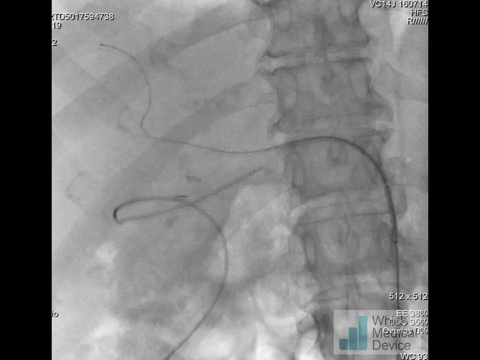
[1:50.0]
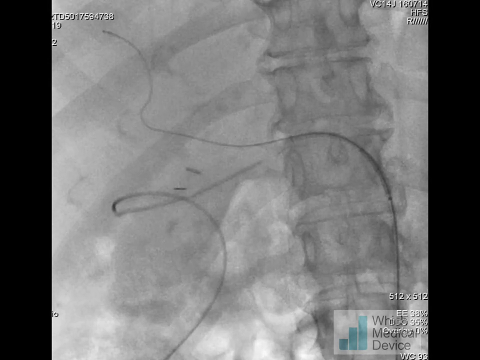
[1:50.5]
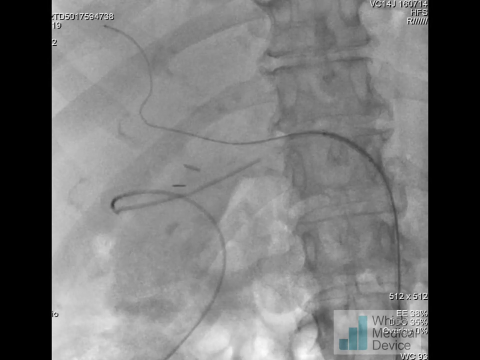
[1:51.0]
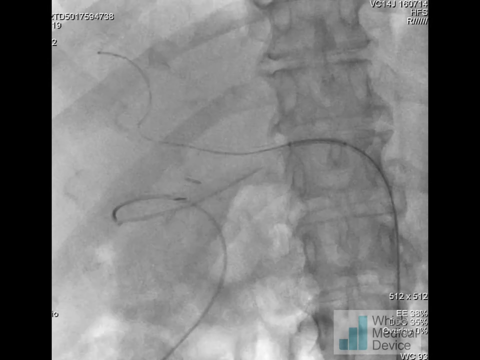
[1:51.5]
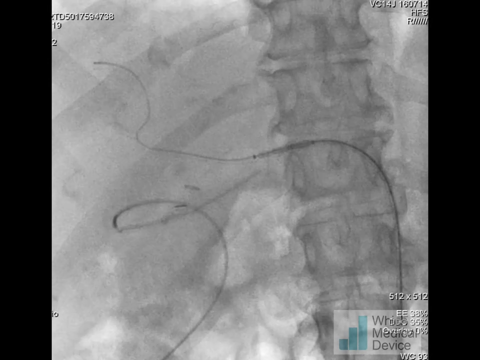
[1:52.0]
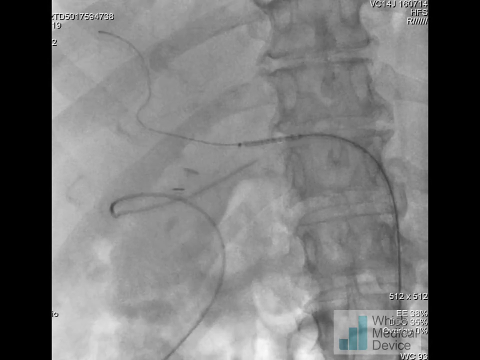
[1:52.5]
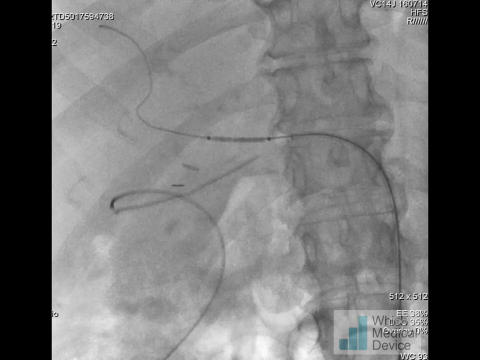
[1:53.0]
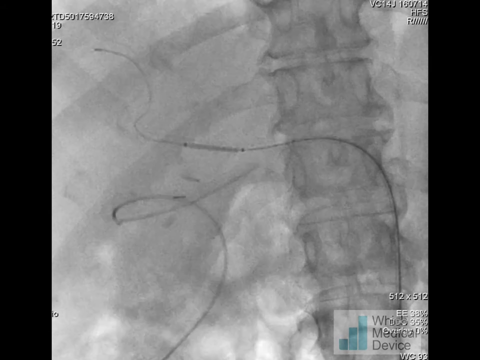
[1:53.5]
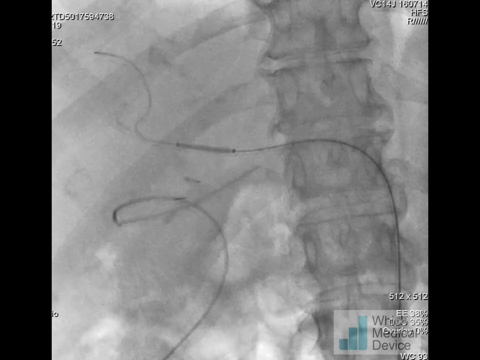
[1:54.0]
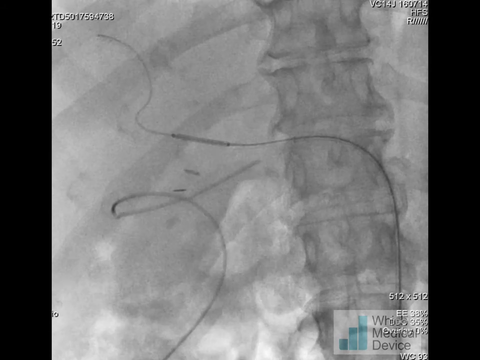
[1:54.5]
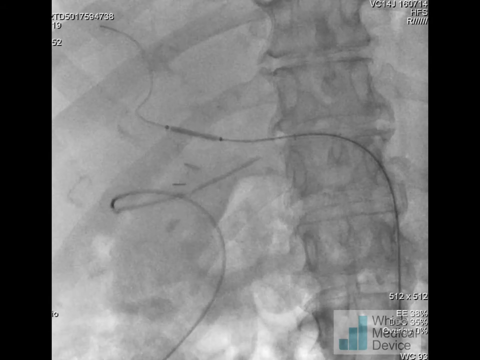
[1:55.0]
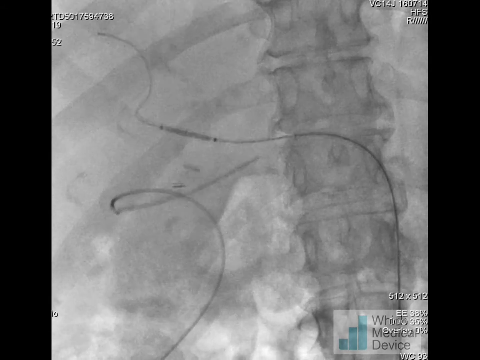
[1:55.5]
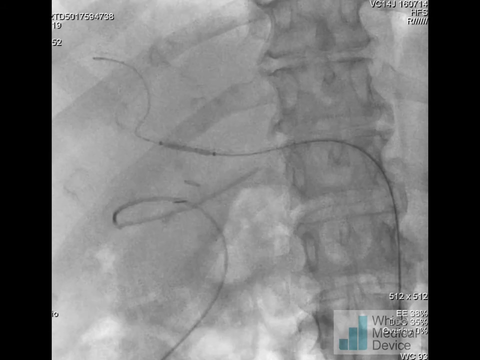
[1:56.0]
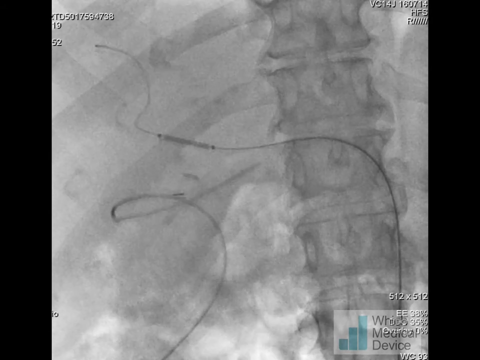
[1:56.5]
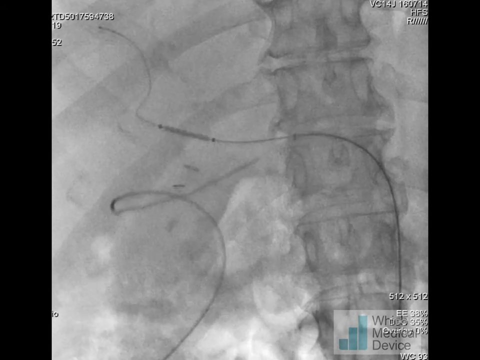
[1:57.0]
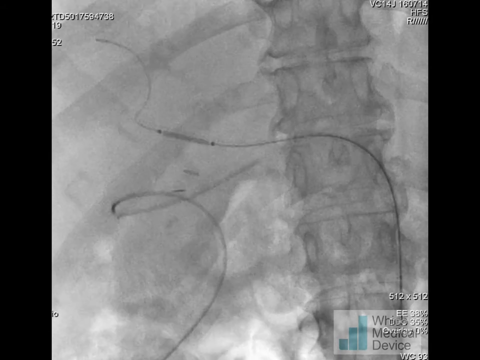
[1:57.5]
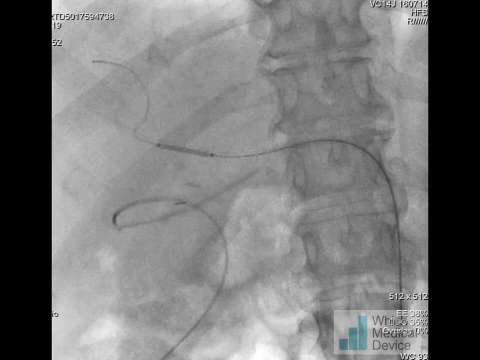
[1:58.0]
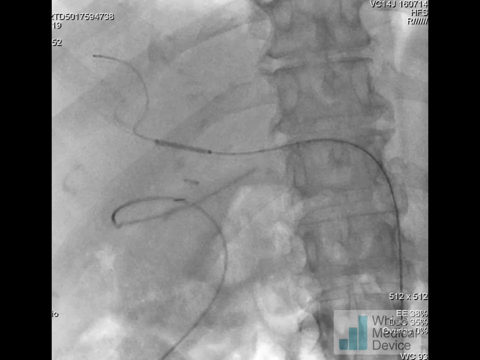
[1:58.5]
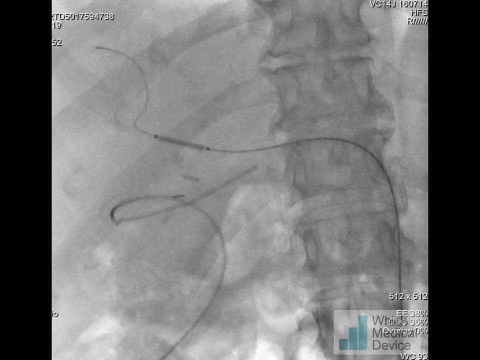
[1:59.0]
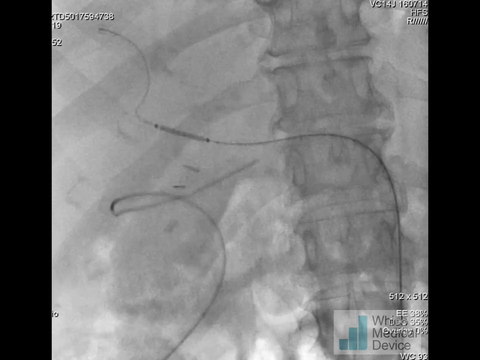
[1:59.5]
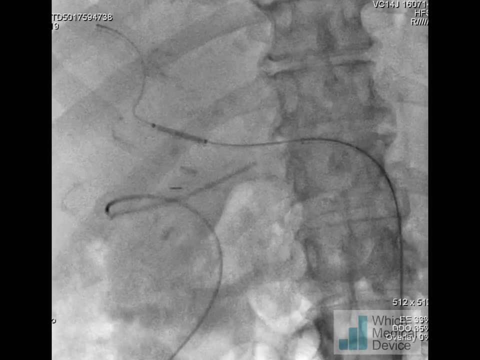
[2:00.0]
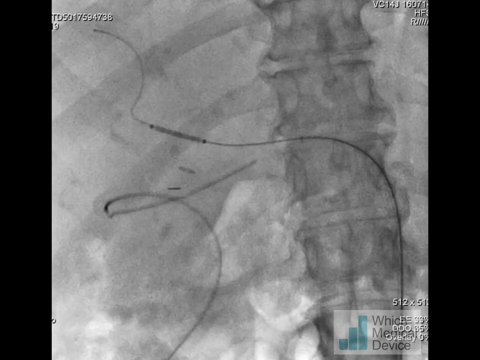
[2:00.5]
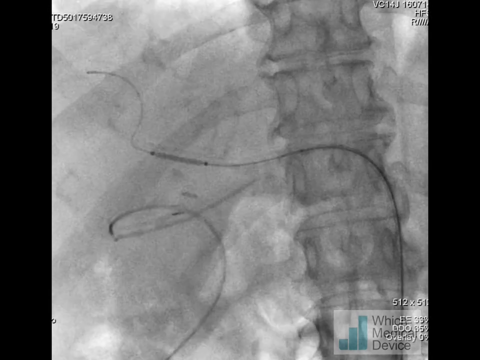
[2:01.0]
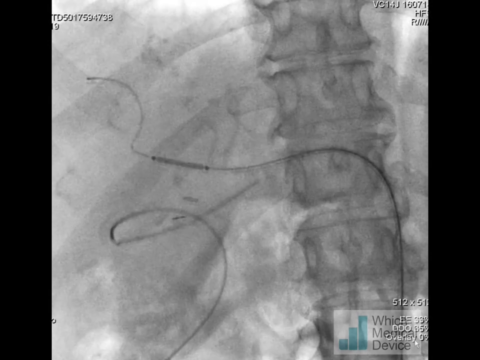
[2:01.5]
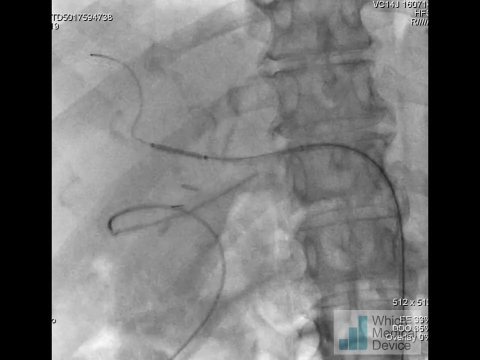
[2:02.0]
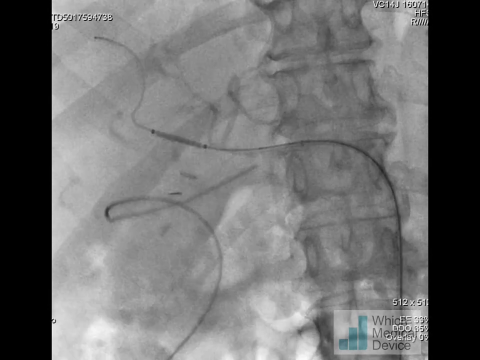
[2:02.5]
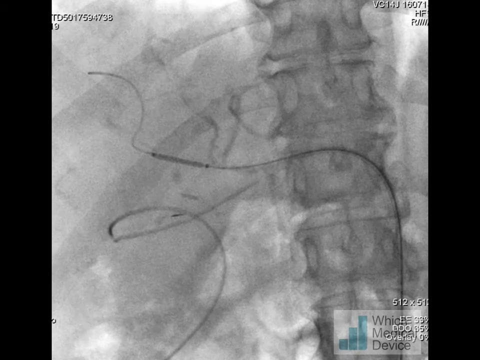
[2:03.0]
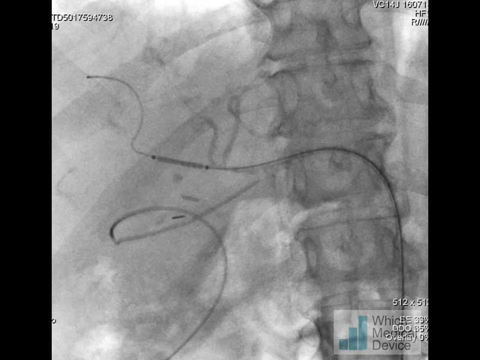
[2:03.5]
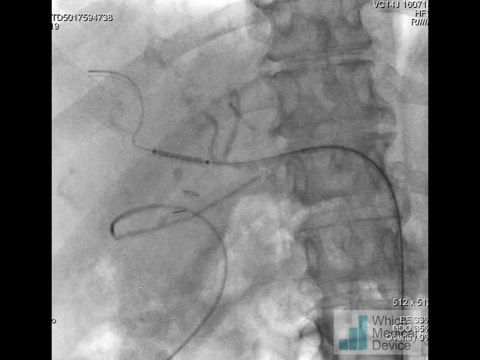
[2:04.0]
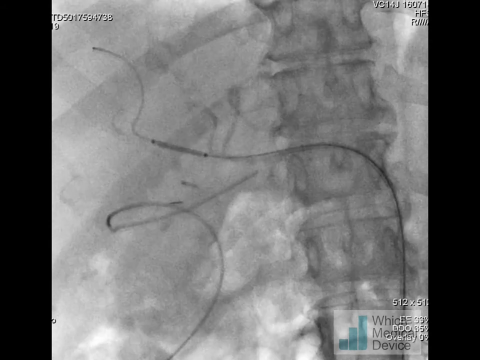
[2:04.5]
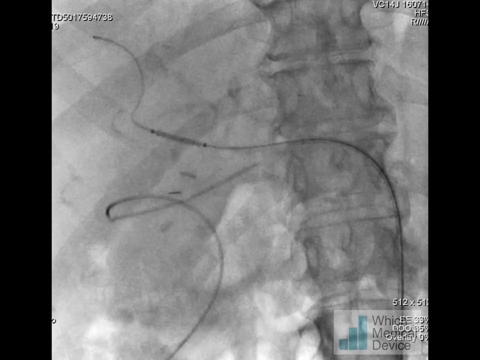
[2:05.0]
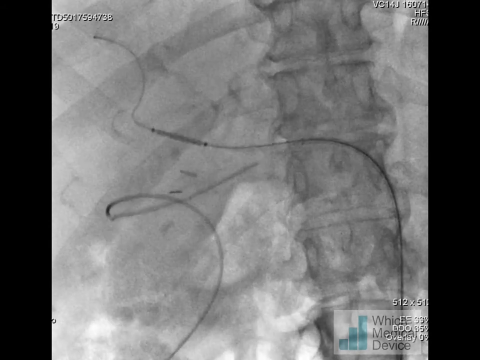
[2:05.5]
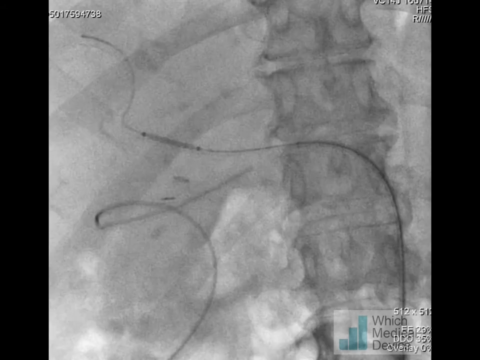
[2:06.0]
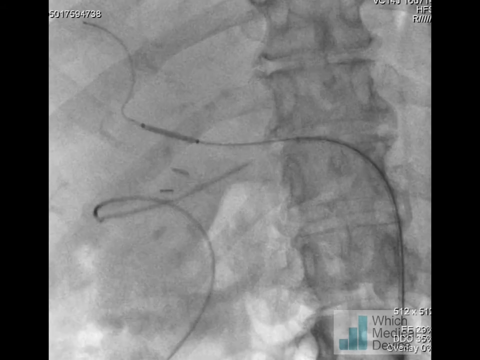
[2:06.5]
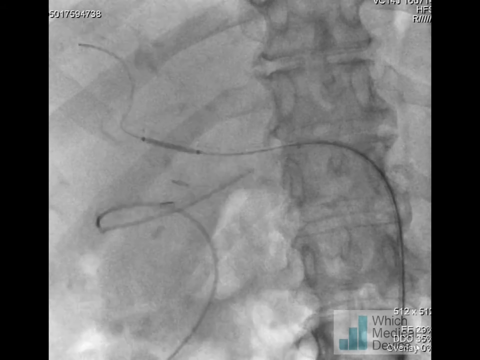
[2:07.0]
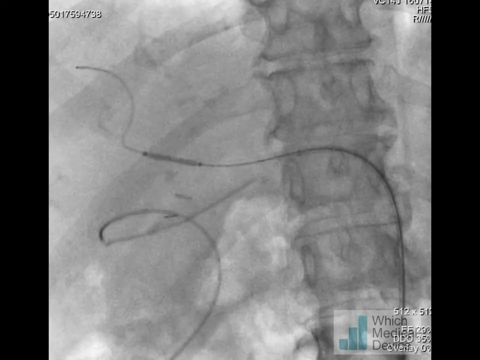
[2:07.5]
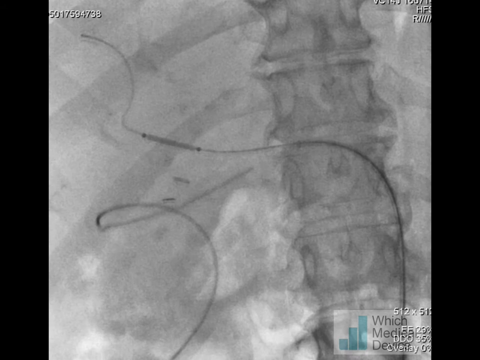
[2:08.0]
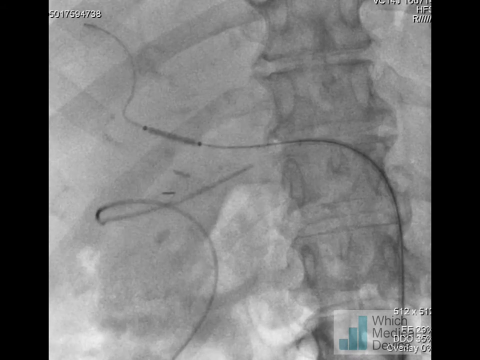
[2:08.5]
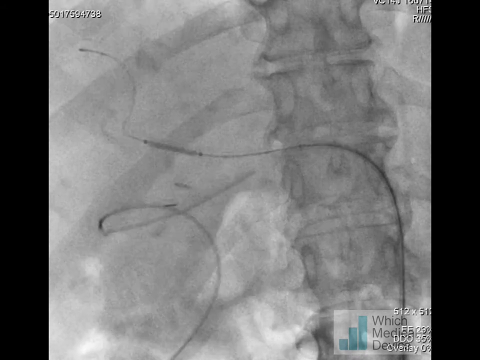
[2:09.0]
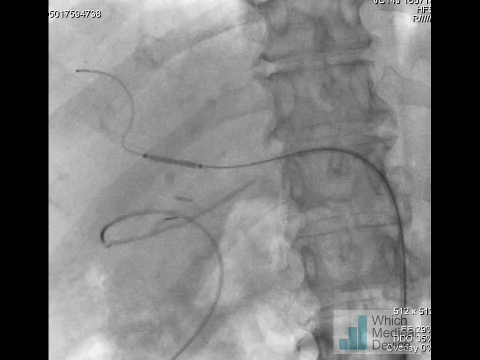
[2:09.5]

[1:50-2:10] An MRI or CT scan shows movement in what may be blood vessels. A line like a string curves up from the lower right corner, runs horizontally across the middle, and then curves upward toward the upper left corner. In the lower portion there is also a curlicue of string, but the focus is mainly on the string running horizontally across the middle. Letters and numbers appear in the upper right corner. A faint spinal column is visible in the background, with the discs and the rib cage curving out on the left and right sides.